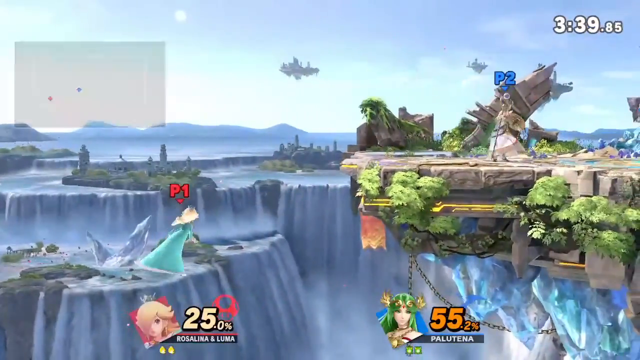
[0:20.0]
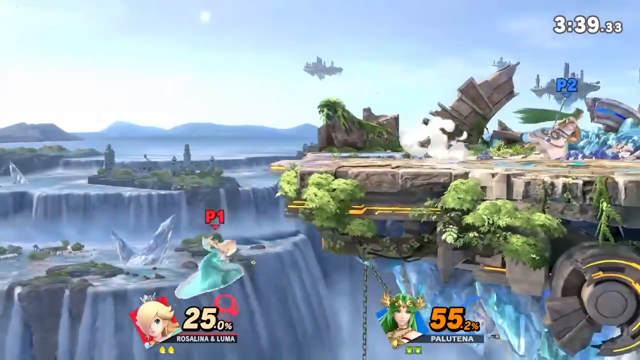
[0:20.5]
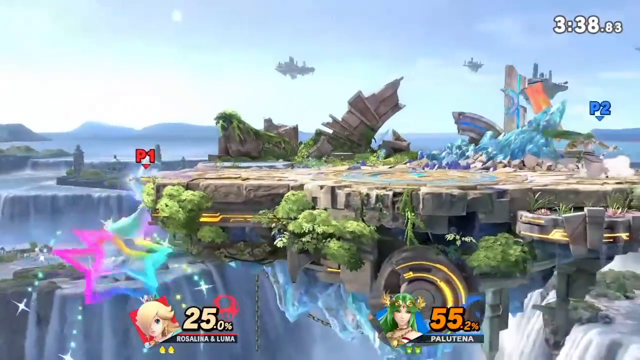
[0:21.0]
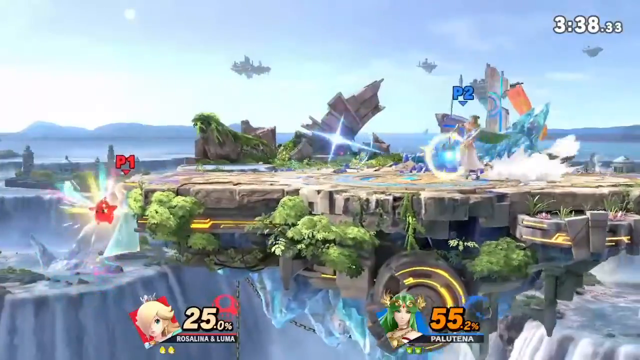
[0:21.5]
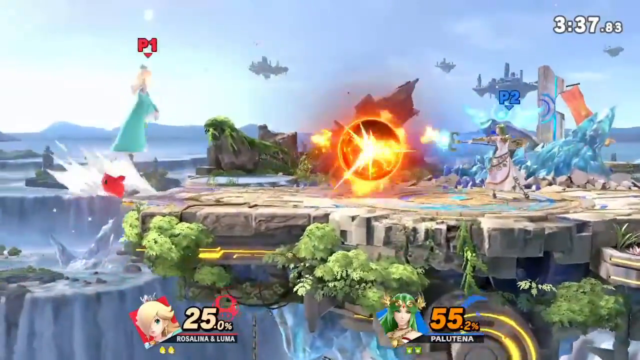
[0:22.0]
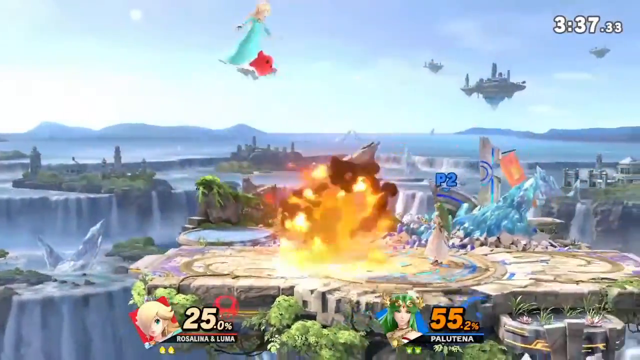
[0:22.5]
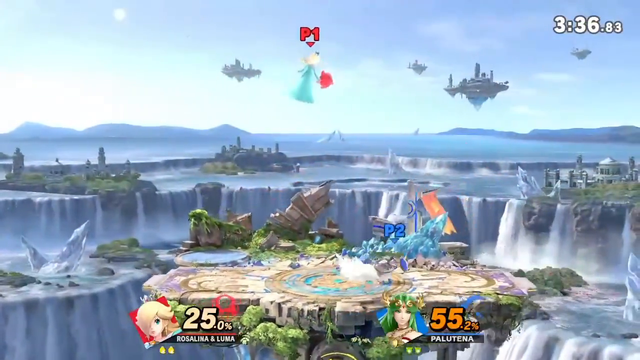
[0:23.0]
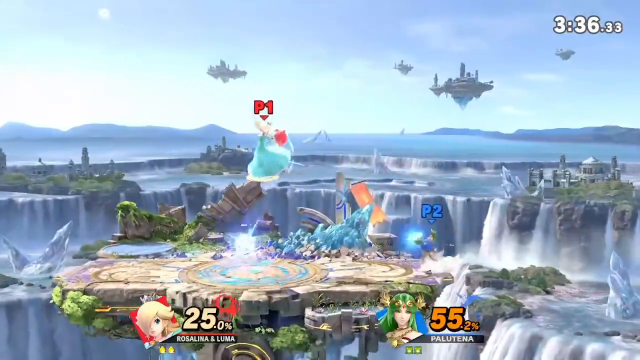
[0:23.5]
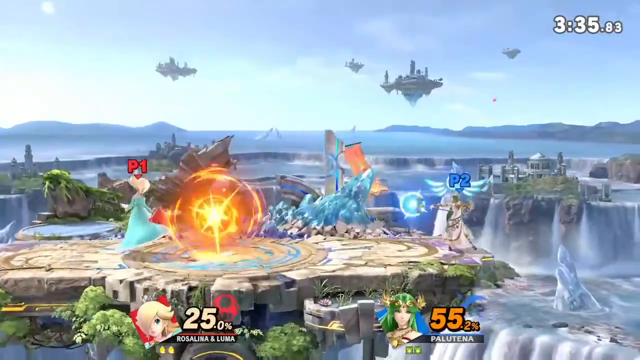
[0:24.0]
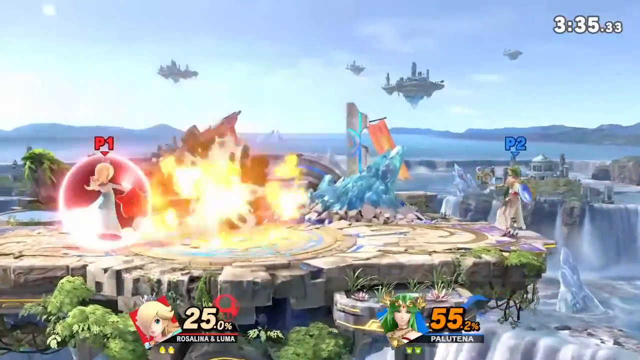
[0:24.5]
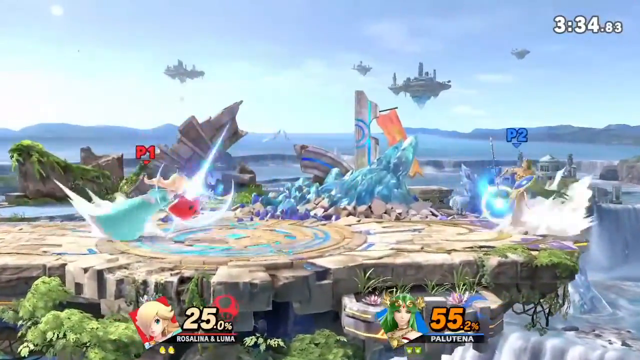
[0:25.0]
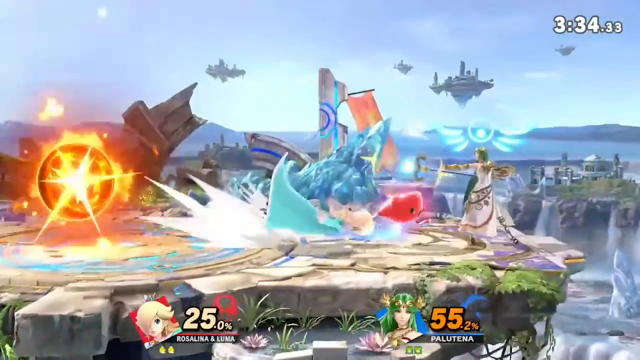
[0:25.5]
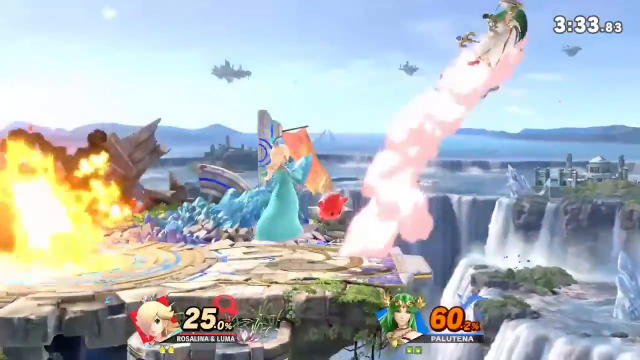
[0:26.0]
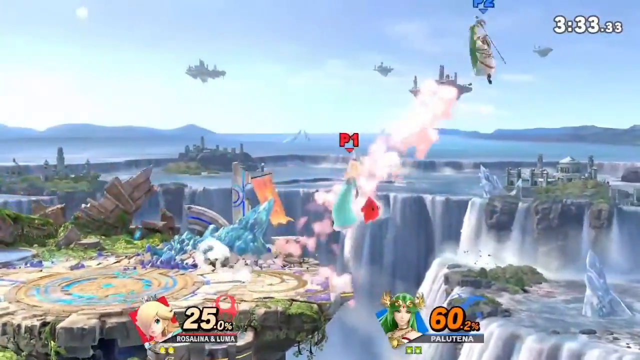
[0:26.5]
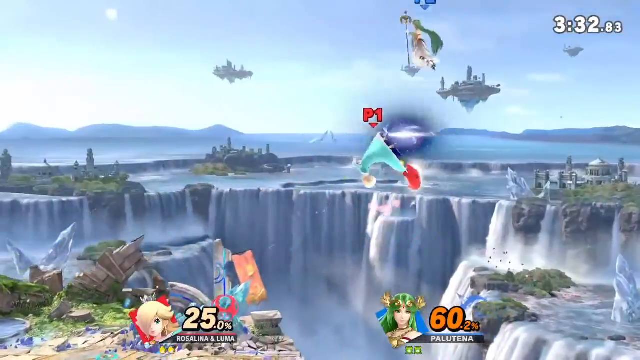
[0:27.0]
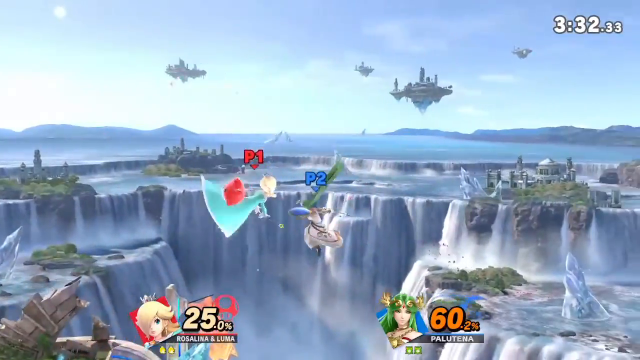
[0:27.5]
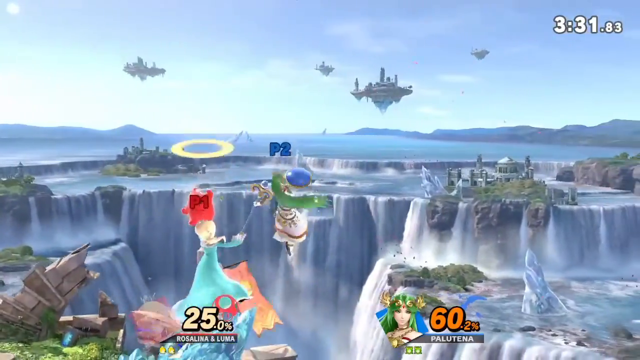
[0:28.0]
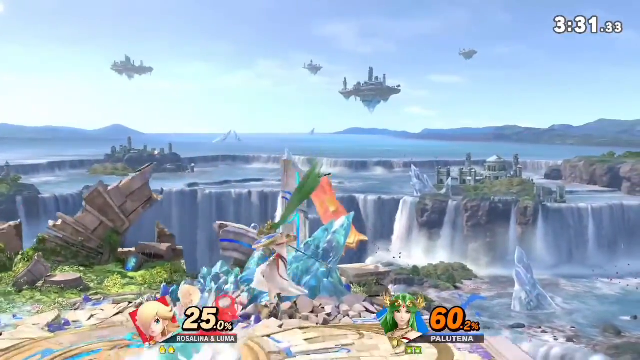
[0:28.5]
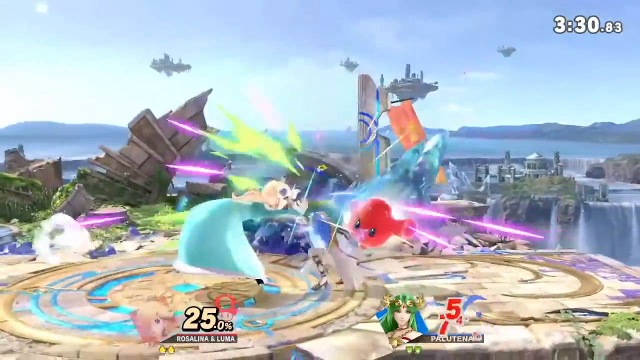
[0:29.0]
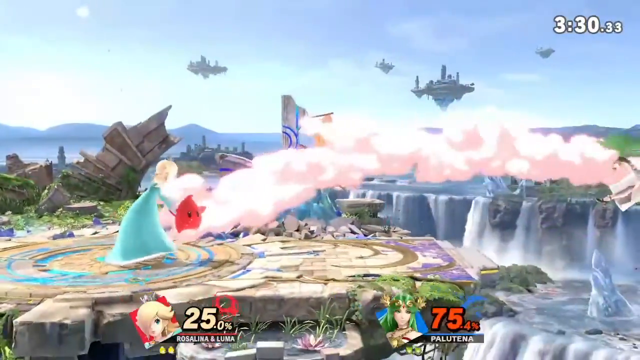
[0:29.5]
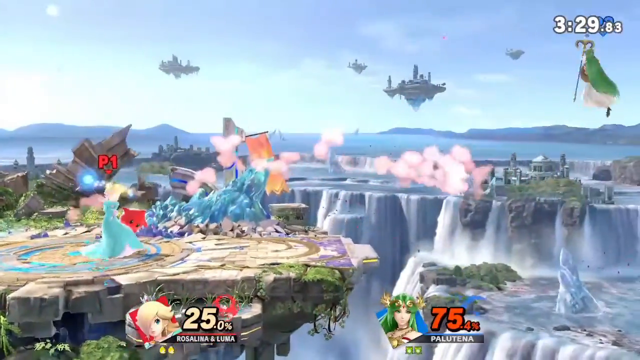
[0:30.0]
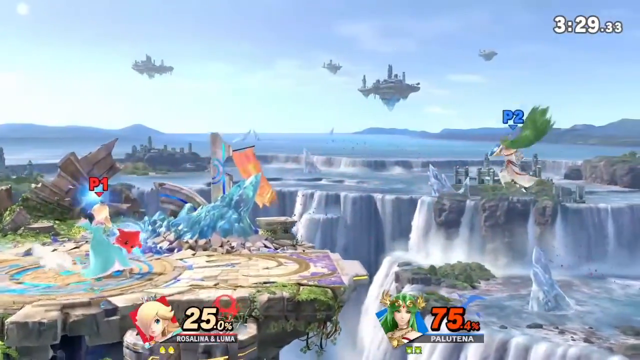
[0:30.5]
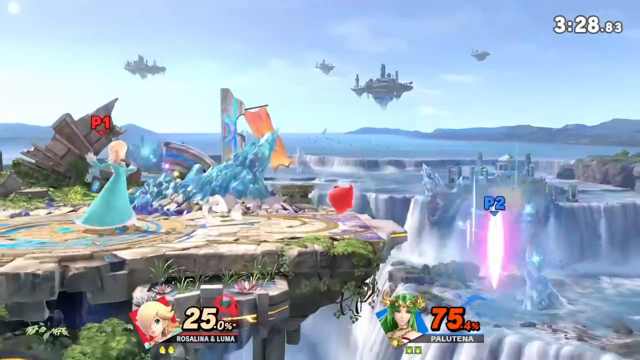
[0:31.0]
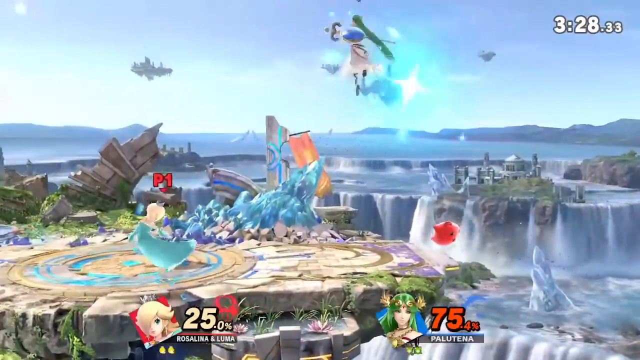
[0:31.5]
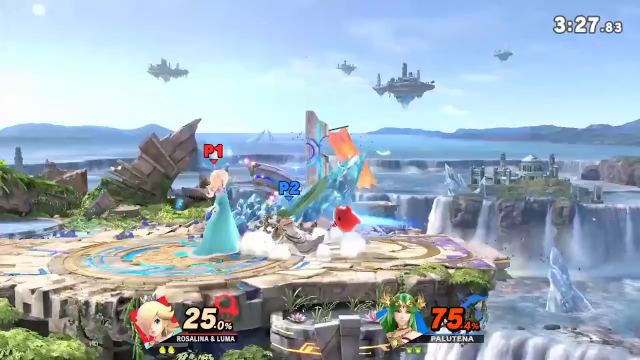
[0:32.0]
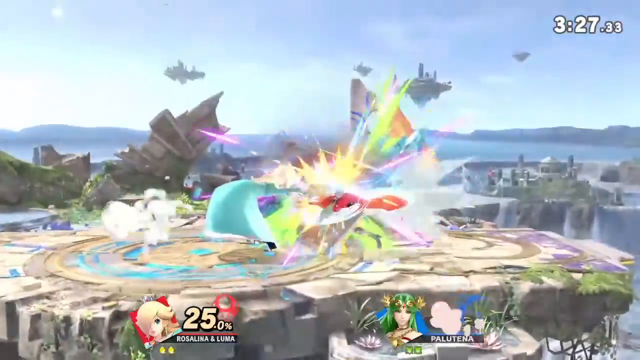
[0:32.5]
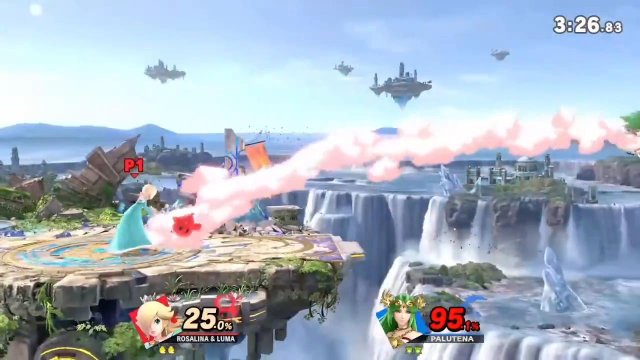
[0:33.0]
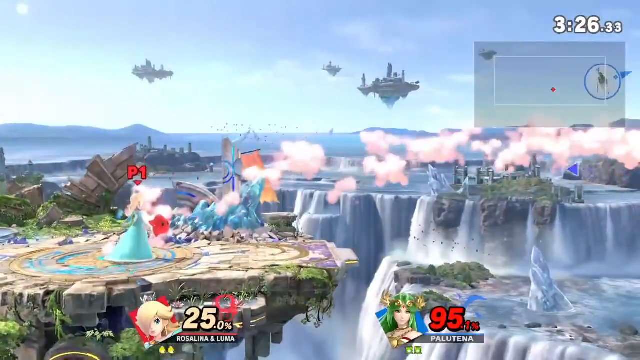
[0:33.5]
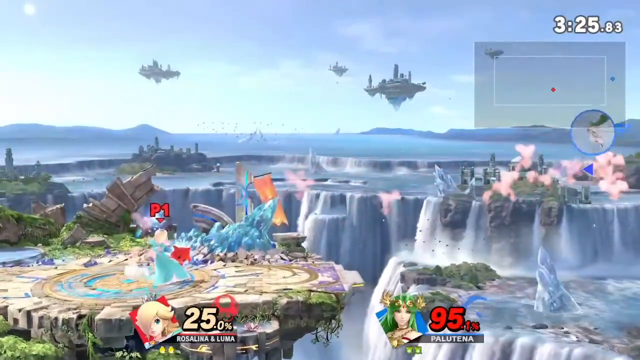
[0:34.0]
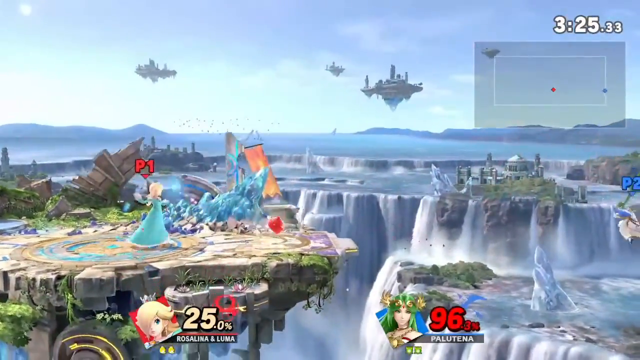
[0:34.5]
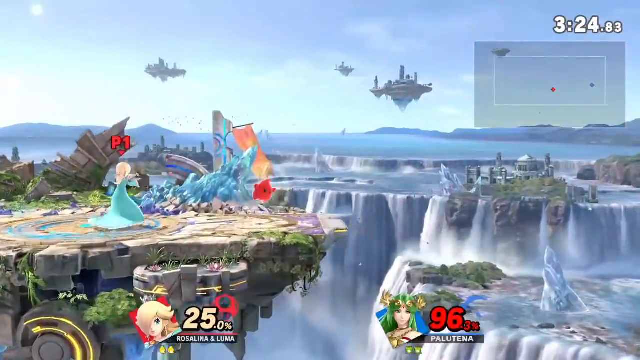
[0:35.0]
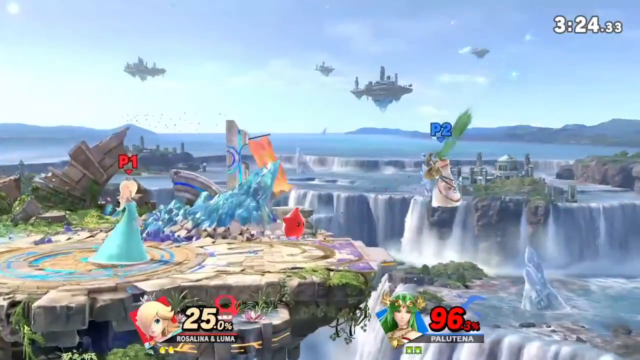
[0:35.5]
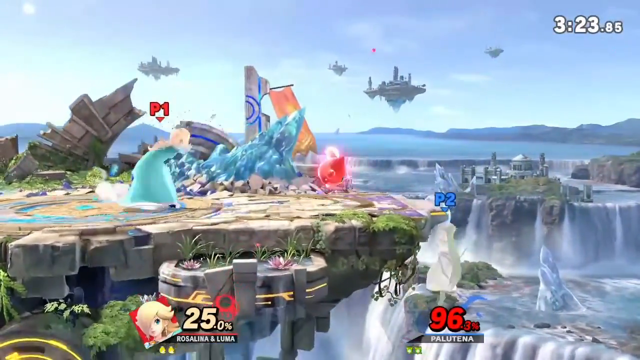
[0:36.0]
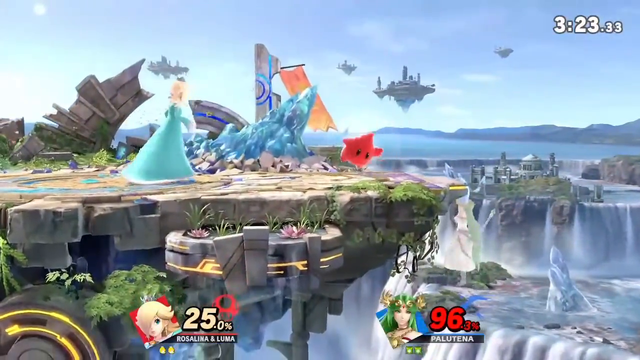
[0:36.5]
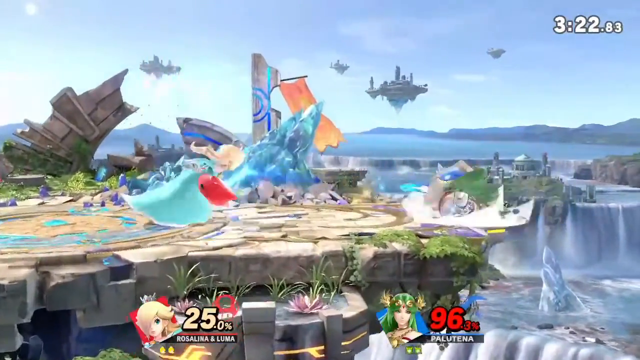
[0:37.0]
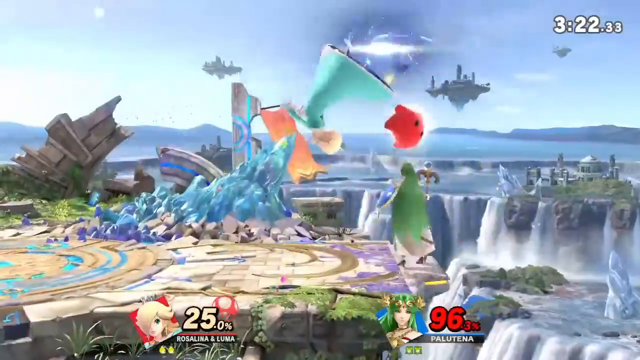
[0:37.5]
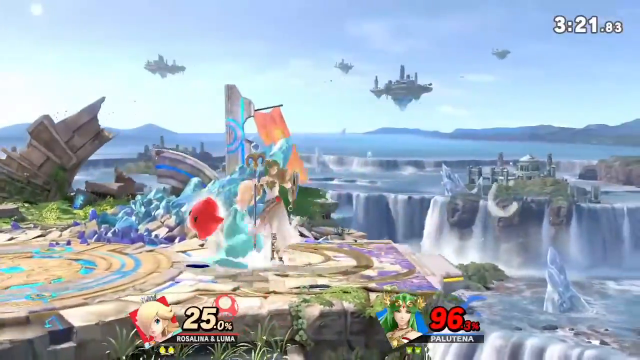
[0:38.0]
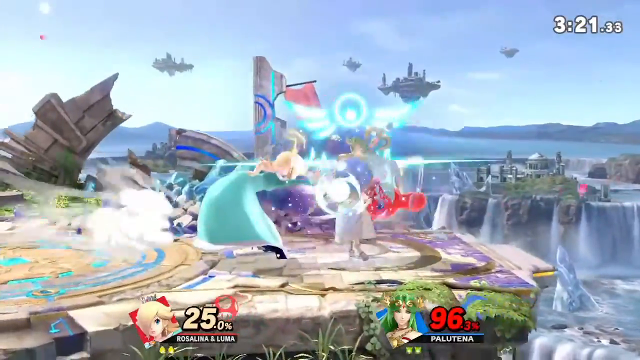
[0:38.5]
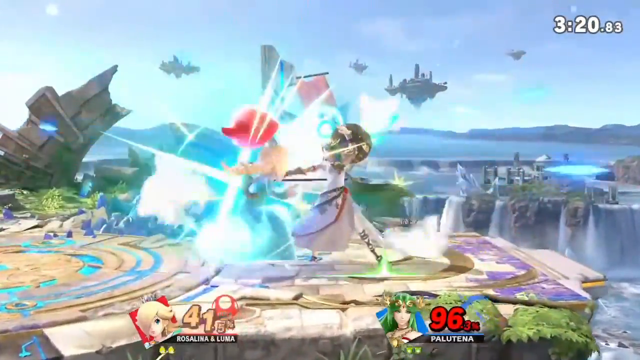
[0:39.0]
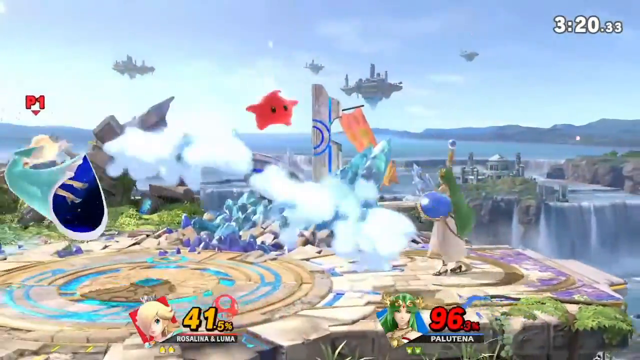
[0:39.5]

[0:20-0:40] As the fight continues, both players jump and go off the platform but are able to jump back onto it and do not fall. A red star appears to be accompanying Player 1, helping to attack Player 2. The white timer in the top right corner of the screen counts down, starting at approximately three and a half minutes. The gameplay alone makes it hard to tell who is winning, but a display at the bottom of the screen shows the two players' names and images: the princess-looking character is called Rosalina and Luma, with Luma apparently being the star, and the mage-type character is Palutena. Based on this, Rosalina and Luma appear to be winning. Rosalina starts at 25% damage and Palutena at 55%, and later Rosalina is at 41.5% and Palutena is at 96% damage.